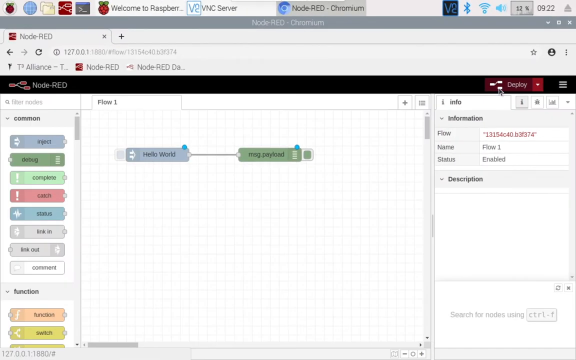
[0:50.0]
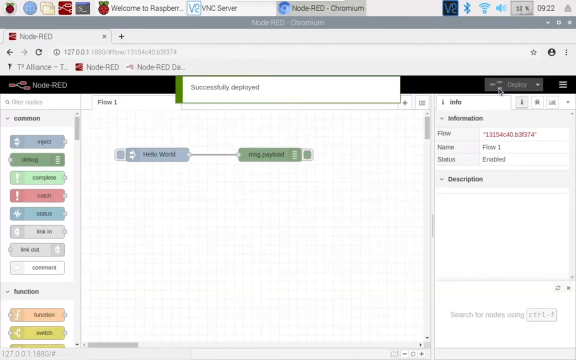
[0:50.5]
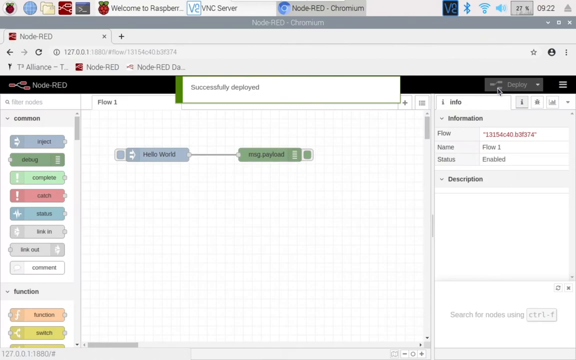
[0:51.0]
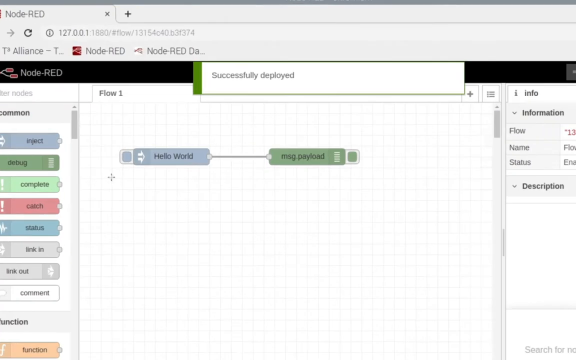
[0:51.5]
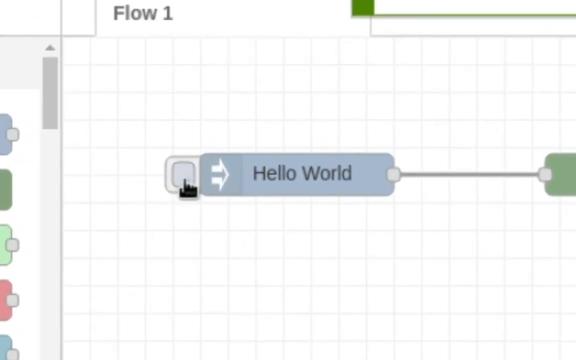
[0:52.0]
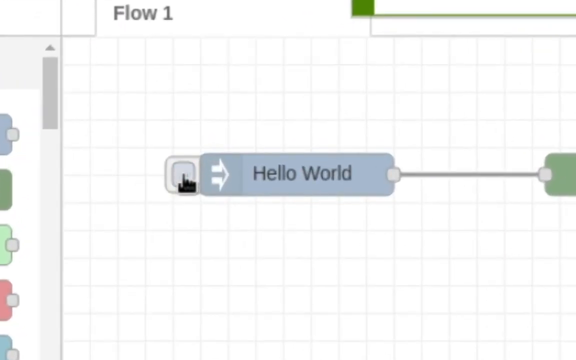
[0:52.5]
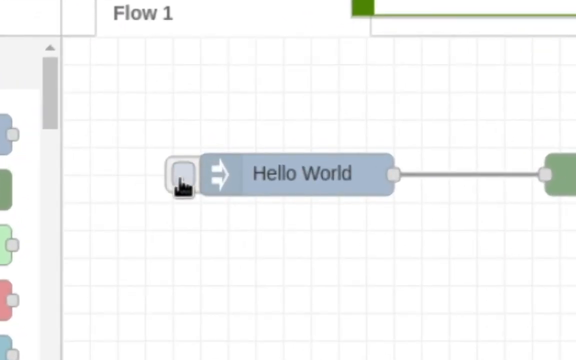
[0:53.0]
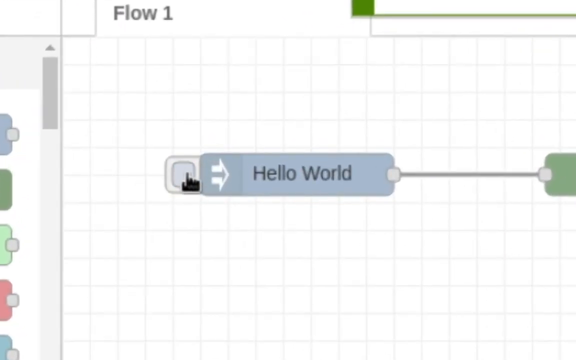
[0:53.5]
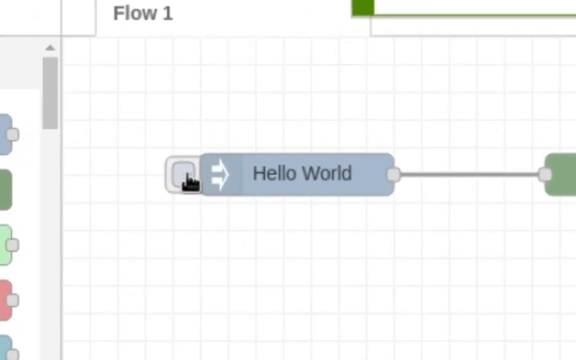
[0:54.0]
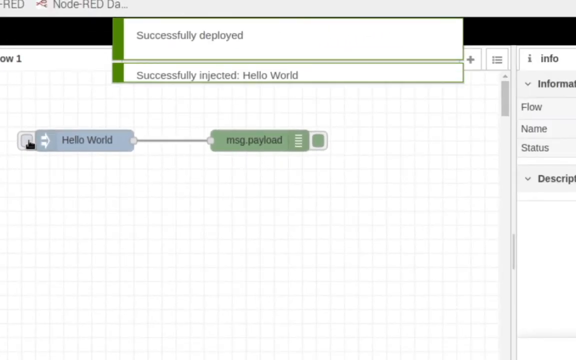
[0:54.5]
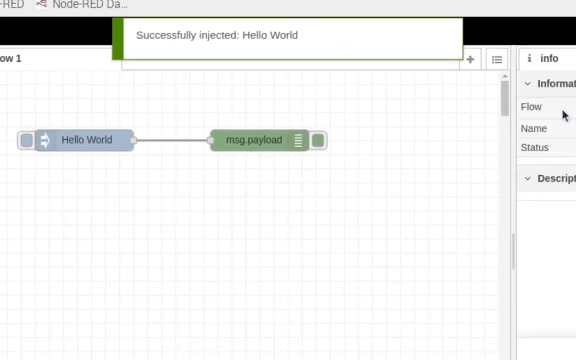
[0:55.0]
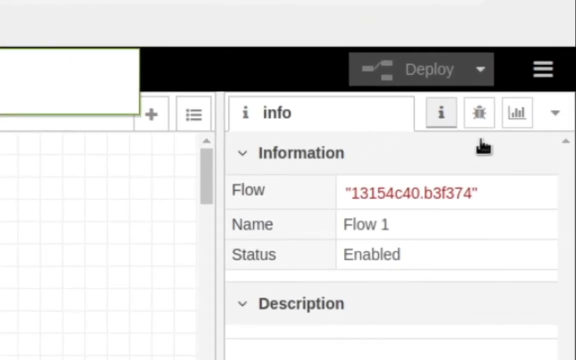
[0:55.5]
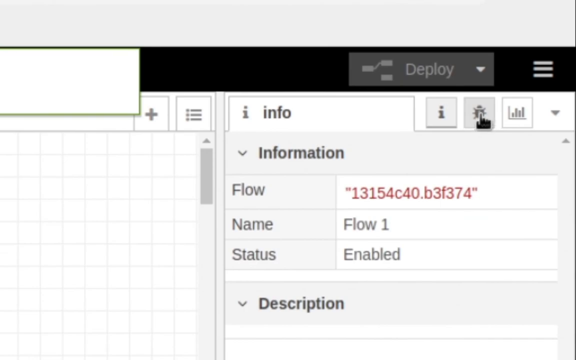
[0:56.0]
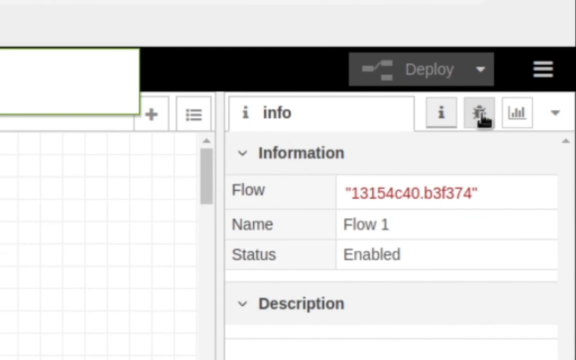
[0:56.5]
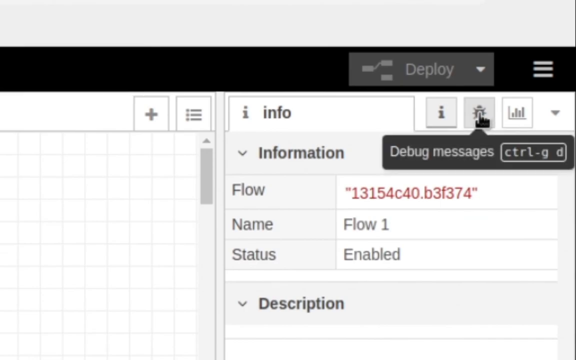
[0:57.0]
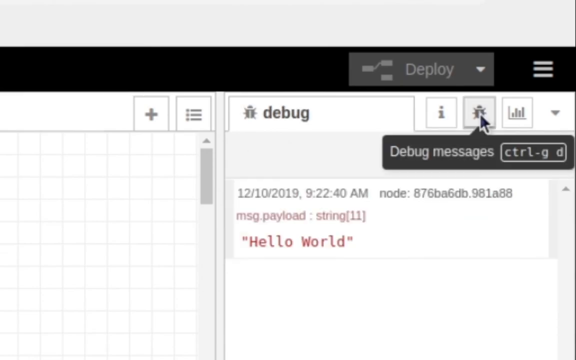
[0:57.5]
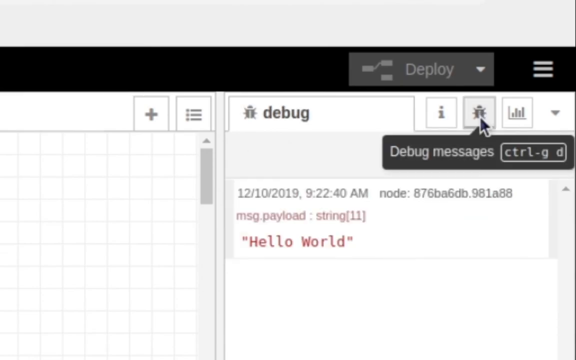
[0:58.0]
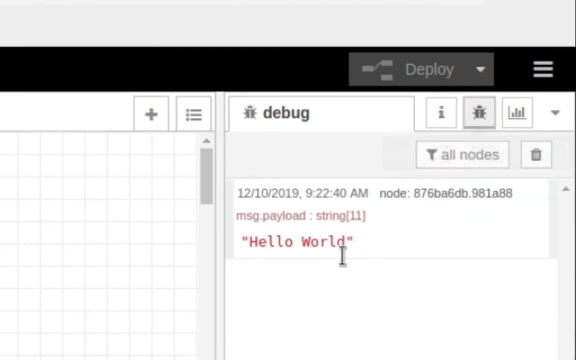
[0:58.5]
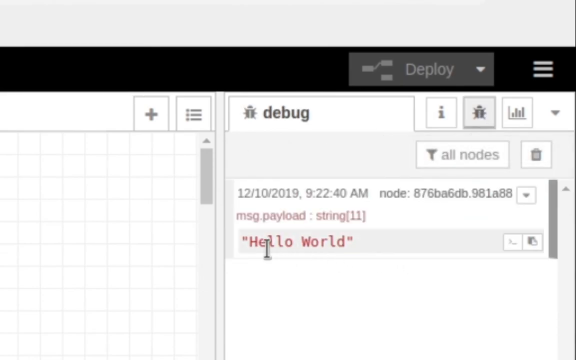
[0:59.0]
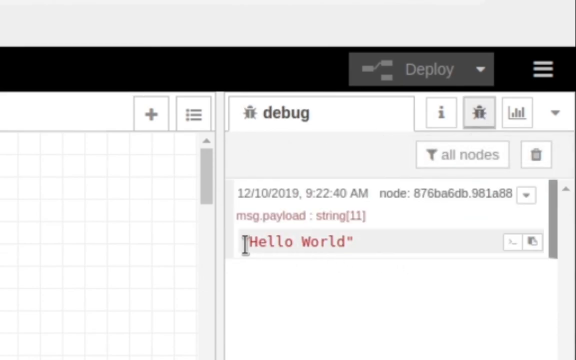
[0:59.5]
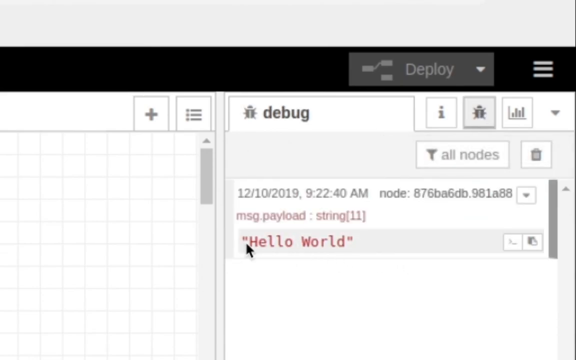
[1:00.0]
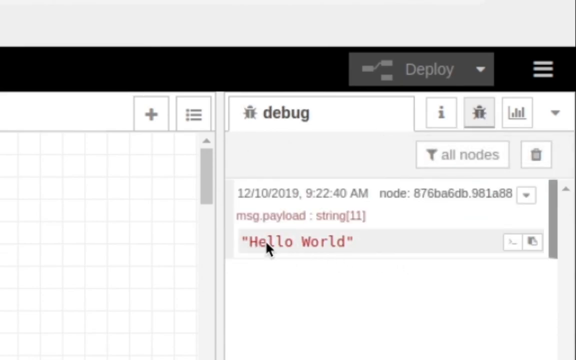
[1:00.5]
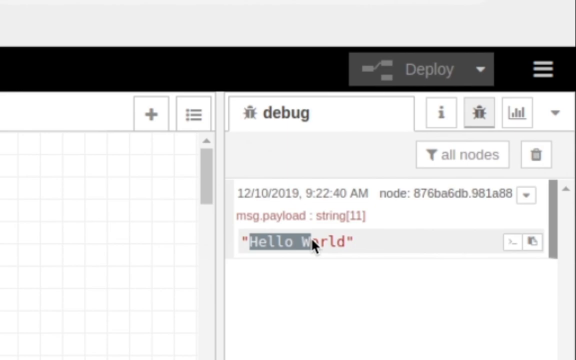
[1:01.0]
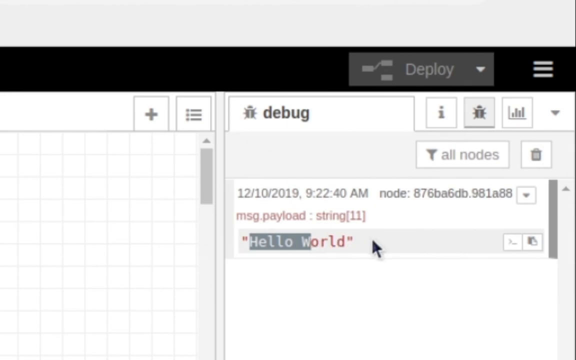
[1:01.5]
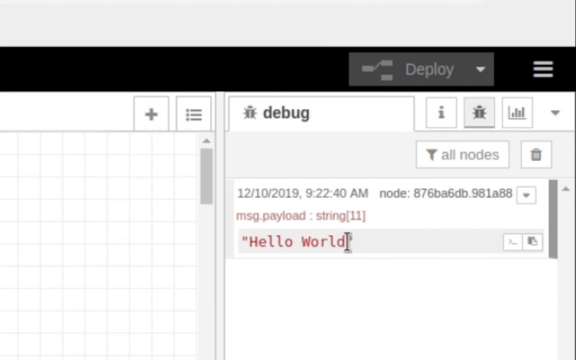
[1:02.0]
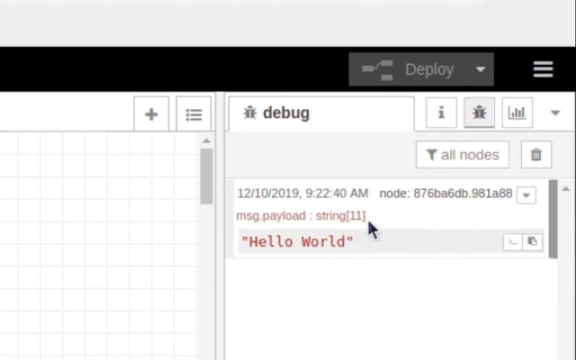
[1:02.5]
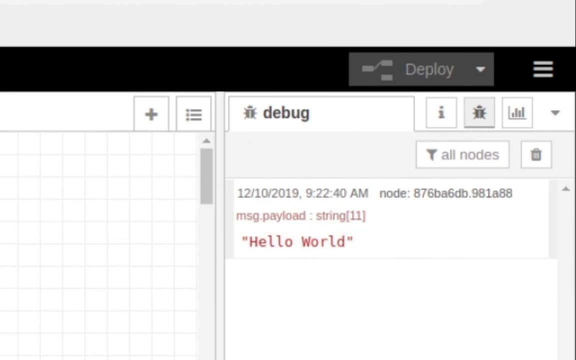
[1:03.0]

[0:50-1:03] The final part of the tutorial shows how to access certain things in the document and how to type and insert them into the columns. It also shows how to debug certain things, how to string from one column to another, where to find certain things, and how to inject messages into the column.